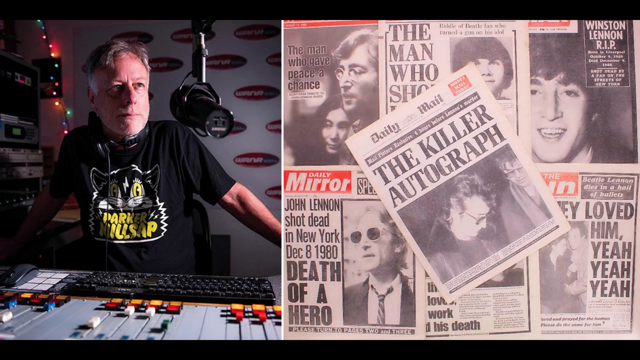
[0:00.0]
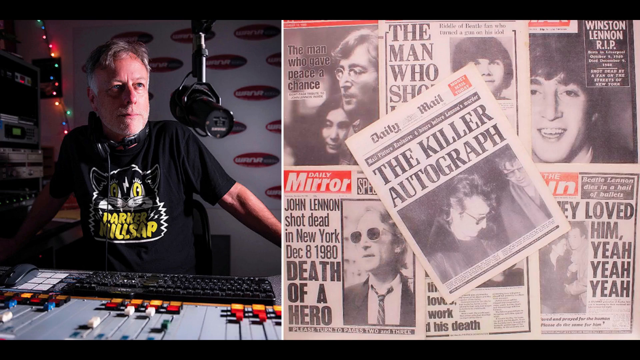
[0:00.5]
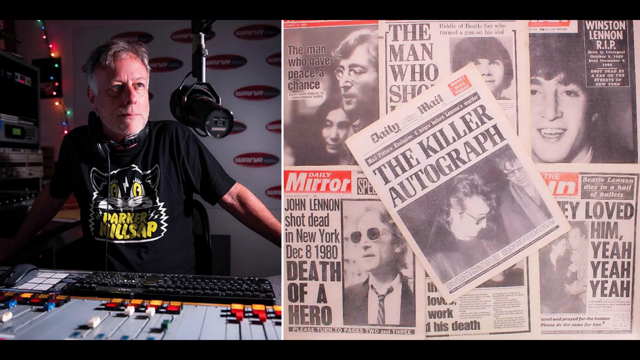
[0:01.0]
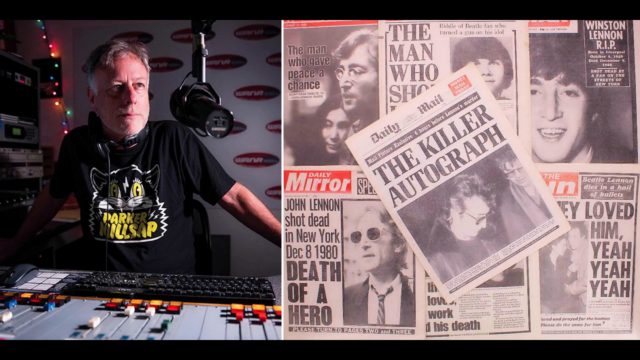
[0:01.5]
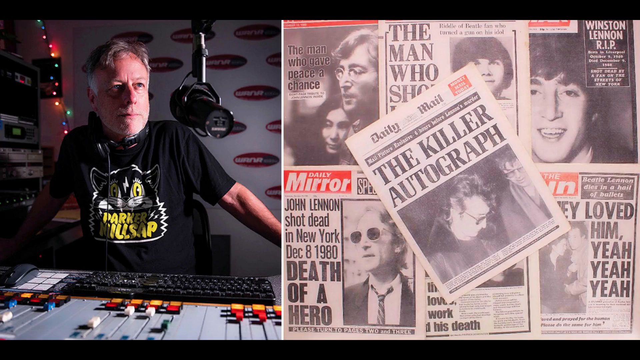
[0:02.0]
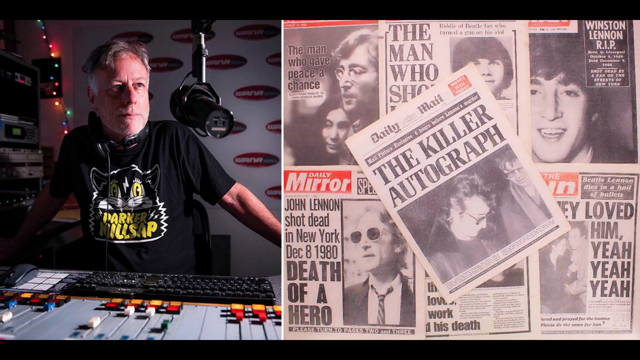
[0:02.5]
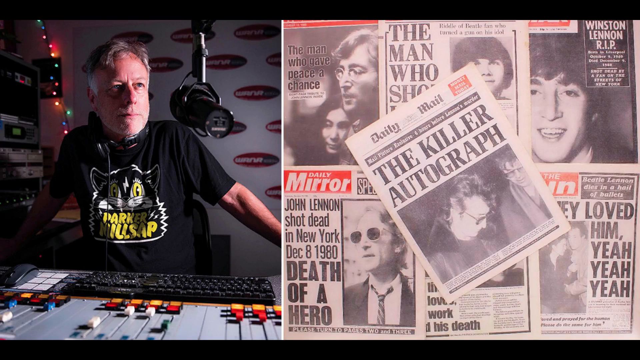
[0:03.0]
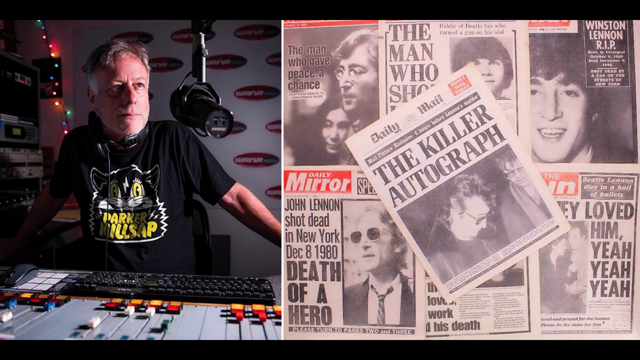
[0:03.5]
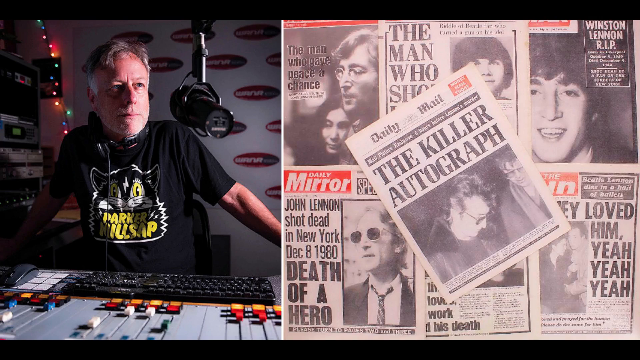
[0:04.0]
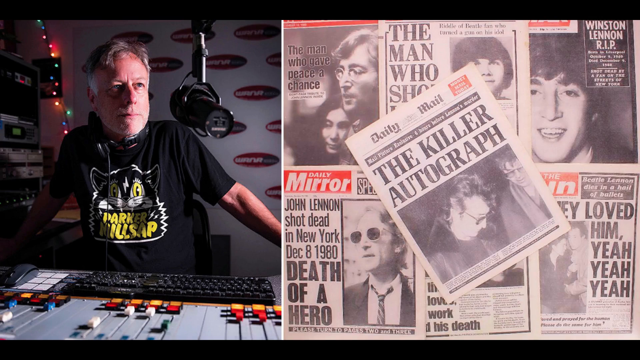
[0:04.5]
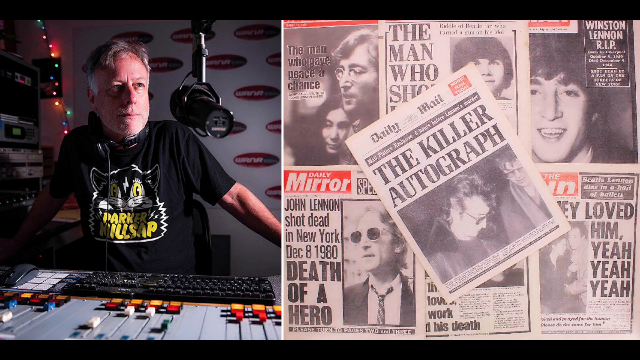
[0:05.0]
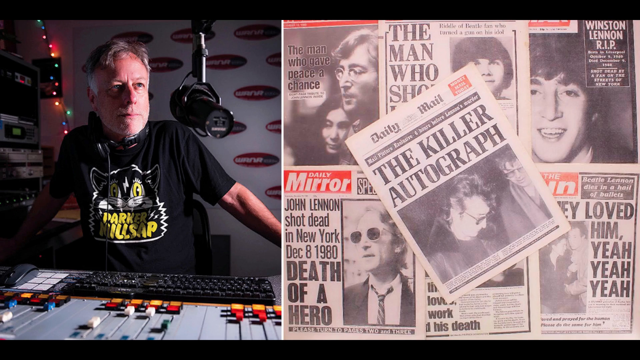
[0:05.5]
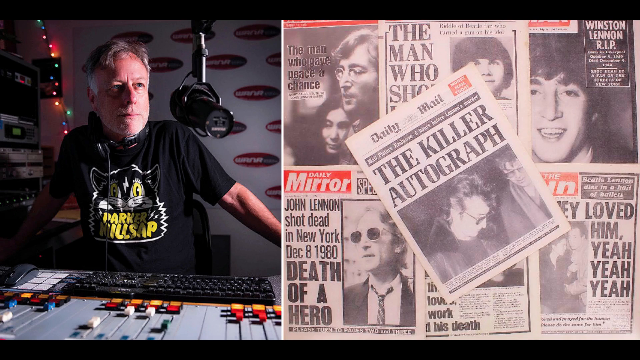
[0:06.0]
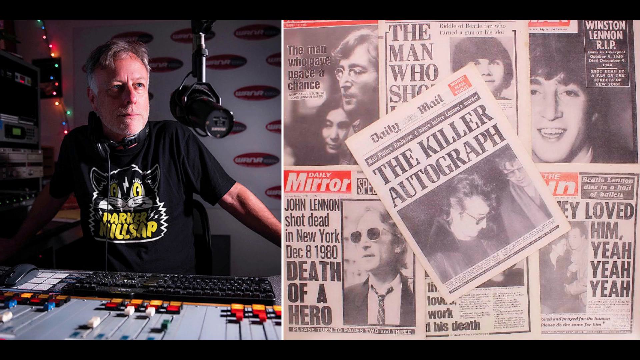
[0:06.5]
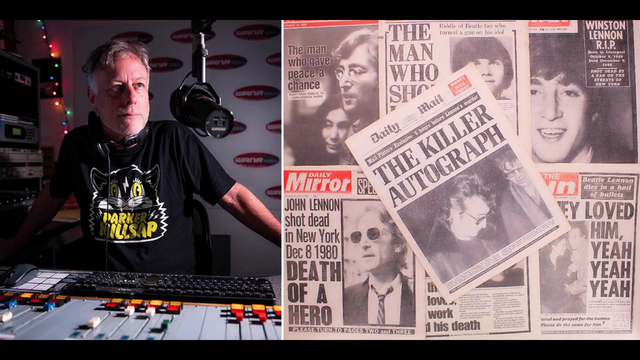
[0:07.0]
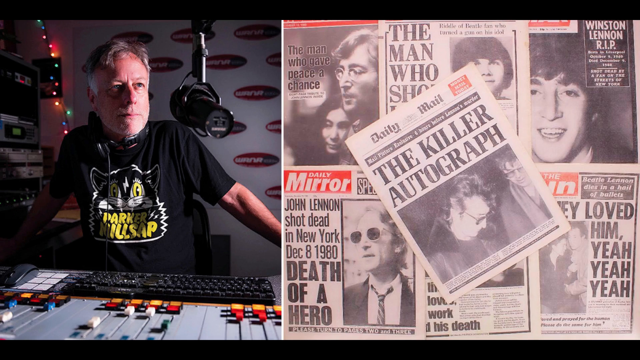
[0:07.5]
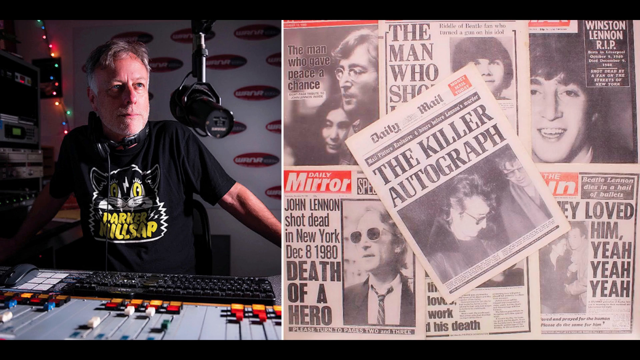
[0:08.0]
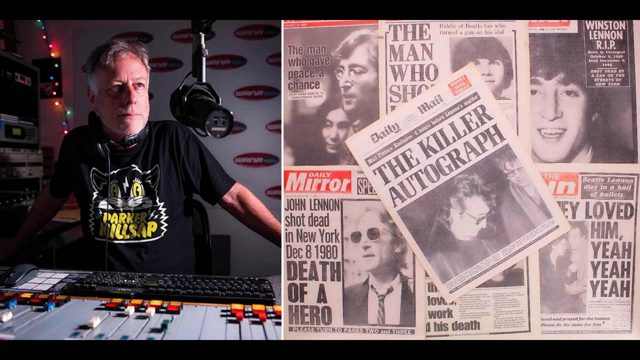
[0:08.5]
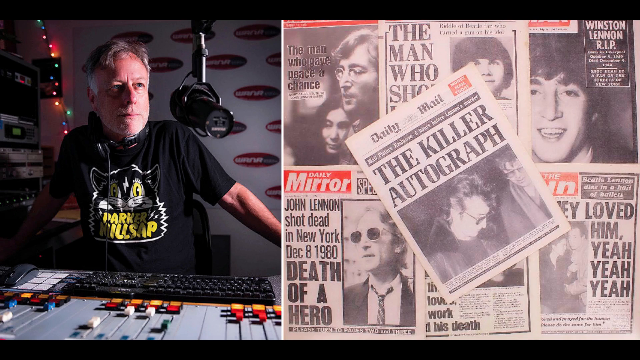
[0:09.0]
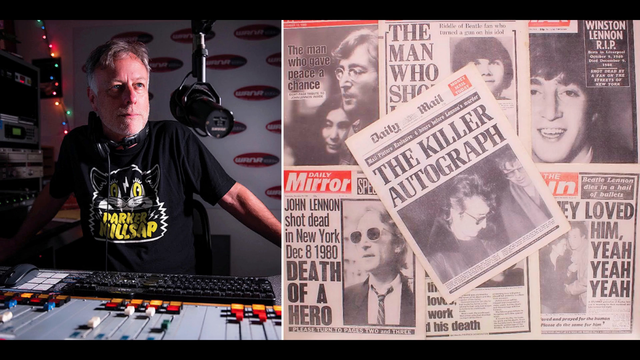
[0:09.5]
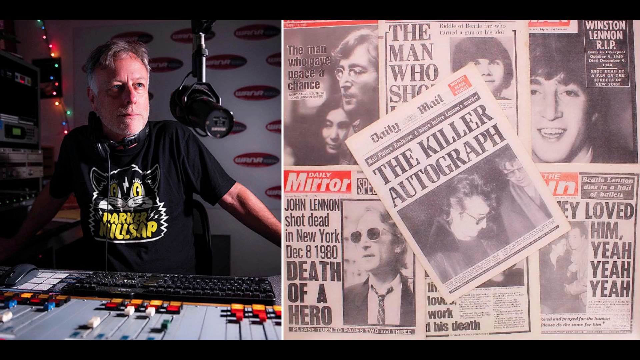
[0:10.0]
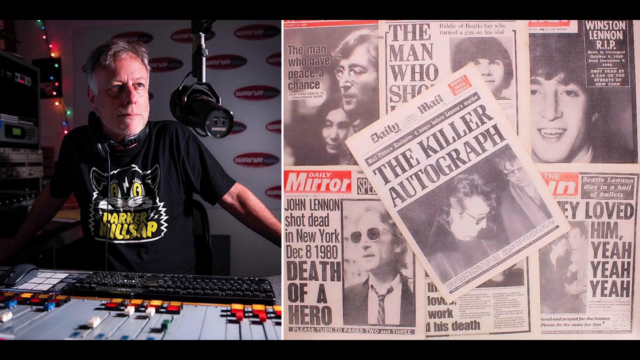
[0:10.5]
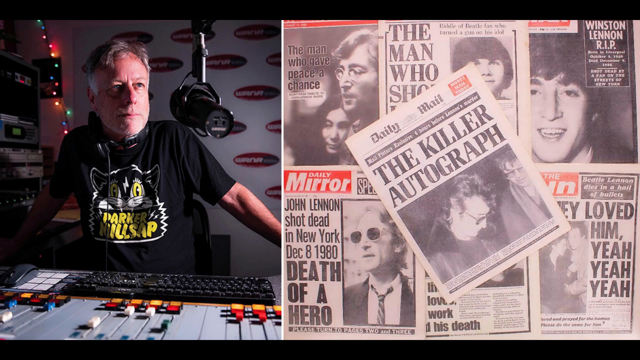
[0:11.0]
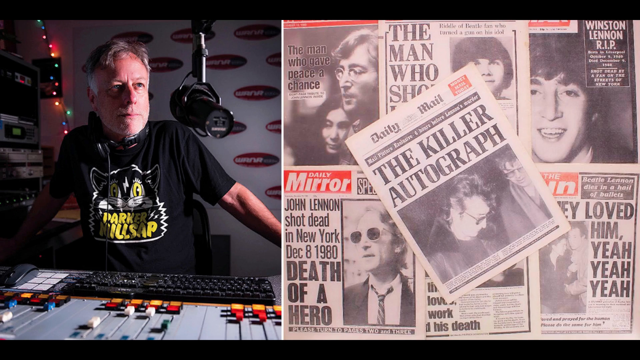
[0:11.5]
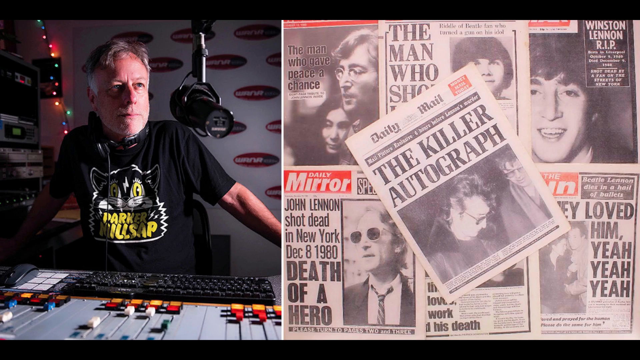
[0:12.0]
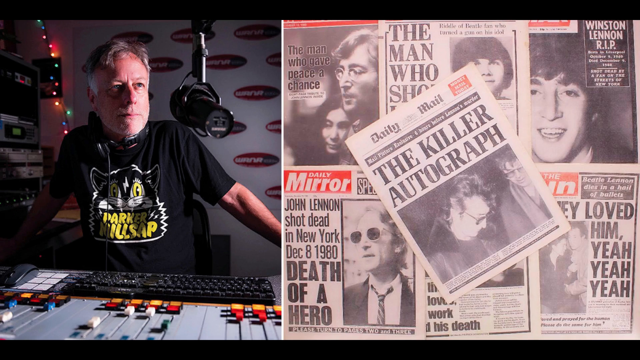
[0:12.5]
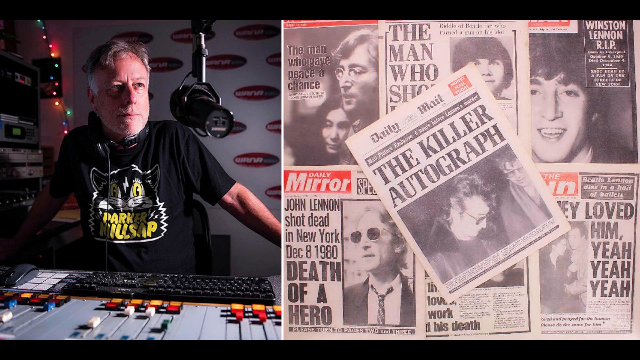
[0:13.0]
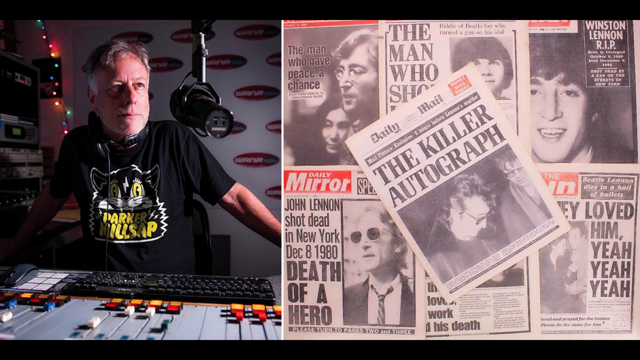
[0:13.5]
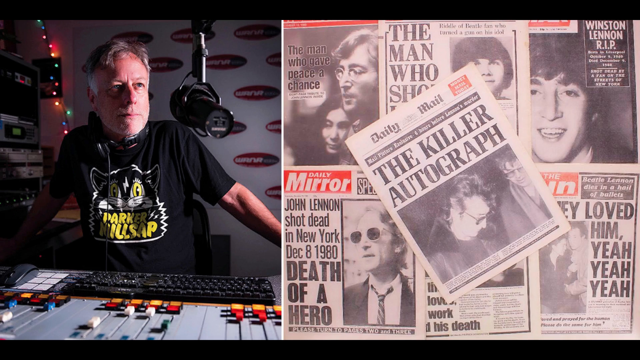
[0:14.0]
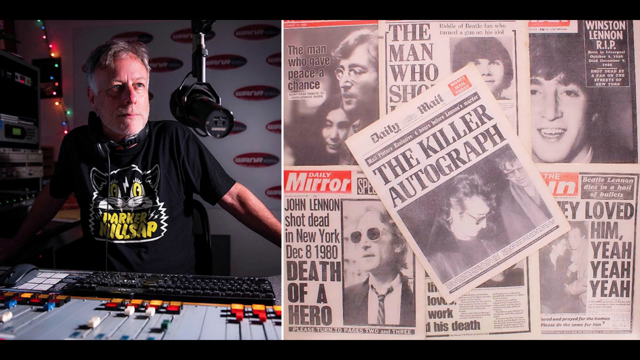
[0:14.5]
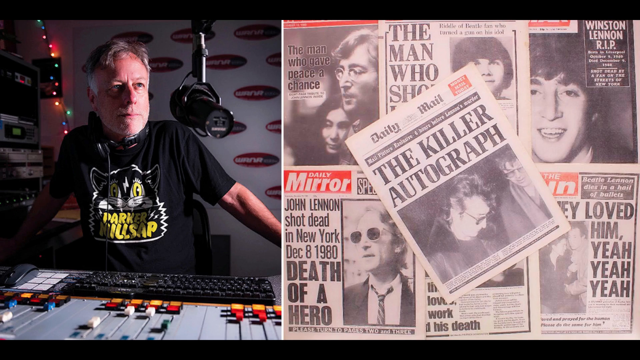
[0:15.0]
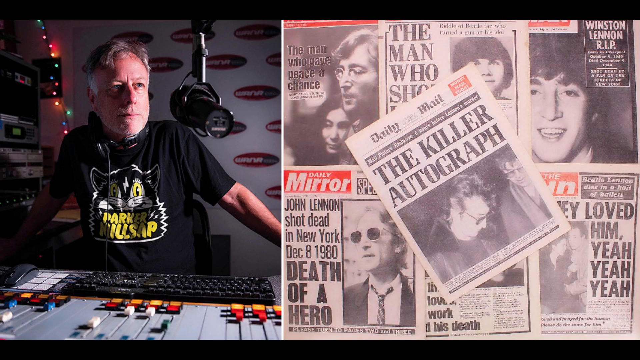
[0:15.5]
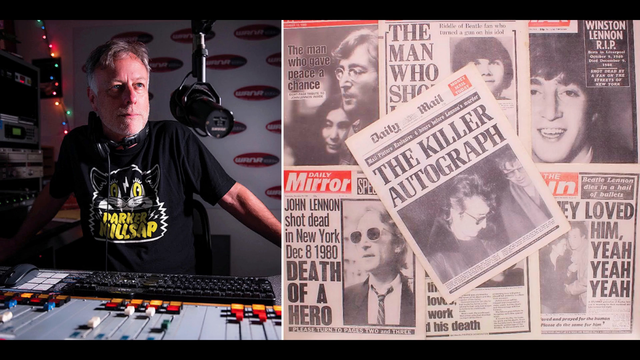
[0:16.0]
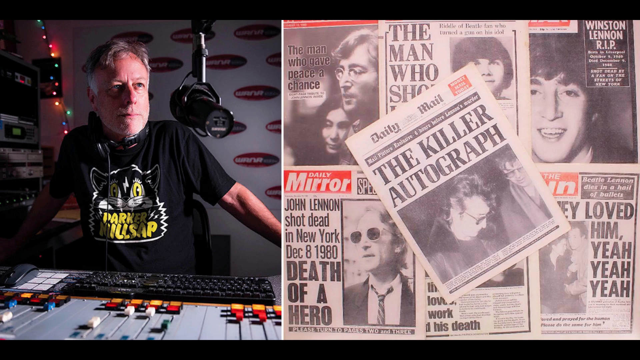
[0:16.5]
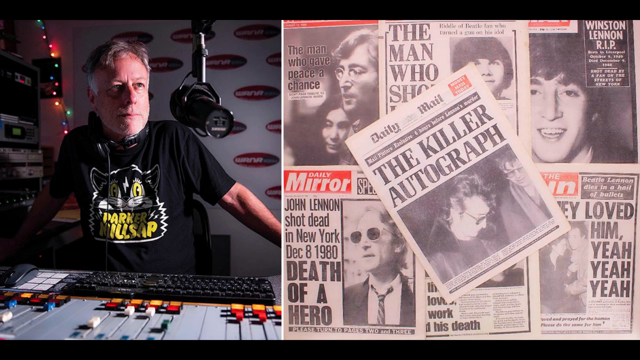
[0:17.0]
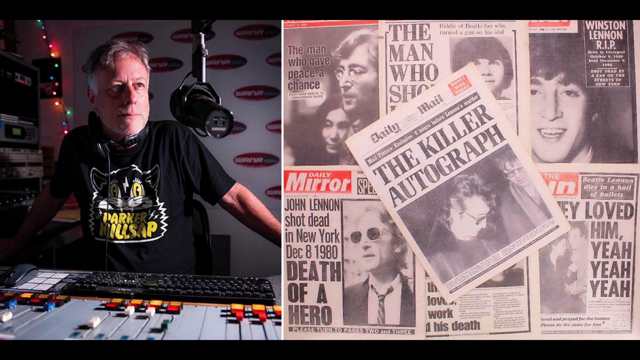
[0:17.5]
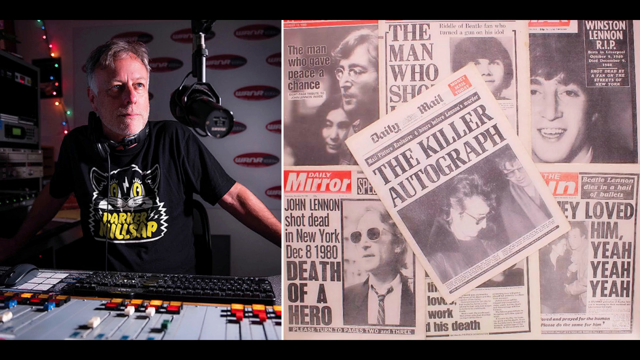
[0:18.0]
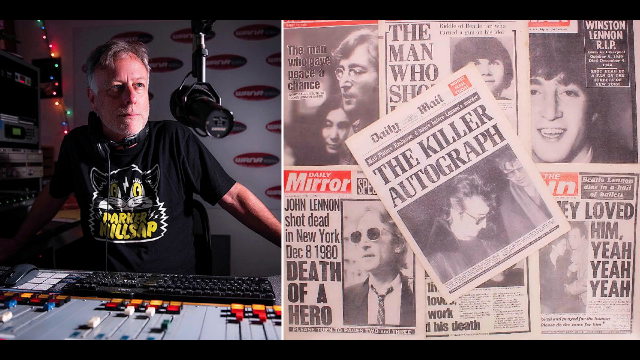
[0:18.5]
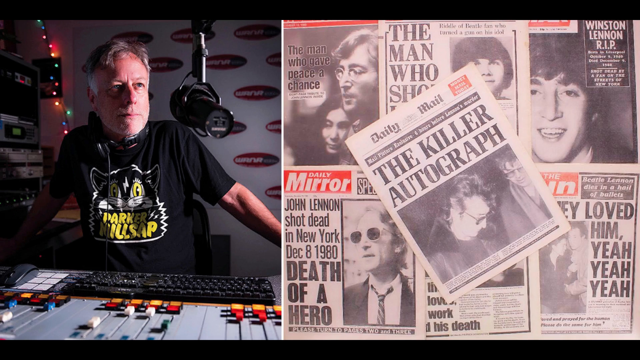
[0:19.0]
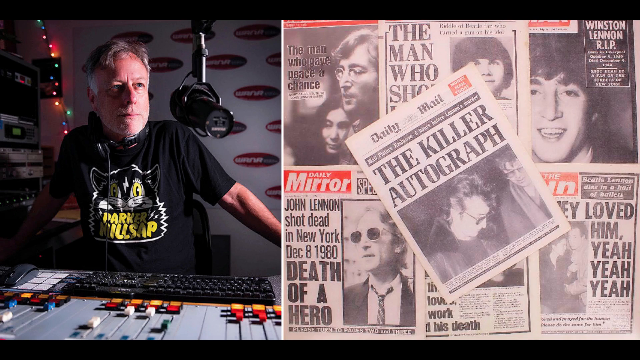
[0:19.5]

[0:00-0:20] A still image is shown in a split-screen view. On the left is what looks to be a radio DJ sitting in a studio. He looks to be an older white man with grayish short hair, wearing a black t-shirt with a white and yellow logo on it. It is difficult to tell exactly what the logo is, but it is kind of square-shaped, with wavy zigzag lines forming a border, white and yellow text in the center and some kind of image. In the back is the studio wall, which is white with an oval logo: black with red outlines and yellow text in the middle, repeated in a pattern of different sizes across the wall. Hanging down in front of the DJ, kind of to his left side, is a large microphone-type device suspended on a silver pole, with a large black input cylinder that he talks through. In front of him are a whole bunch of buttons and switches, presumably his radio control board. Behind him, hanging down from the ceiling, is what looks to be a string of multicolored LED lights in green, blue, red and other colors, almost like Christmas lights. On the right side of the split screen are newspaper articles or clippings kind of arranged in a grid pattern, with a single newspaper positioned on top of the grid, angled and sort of slanted toward the left.